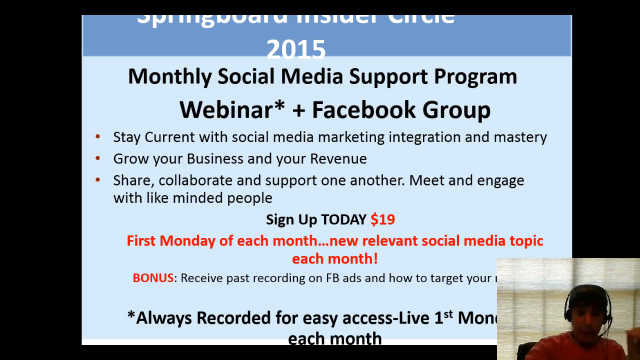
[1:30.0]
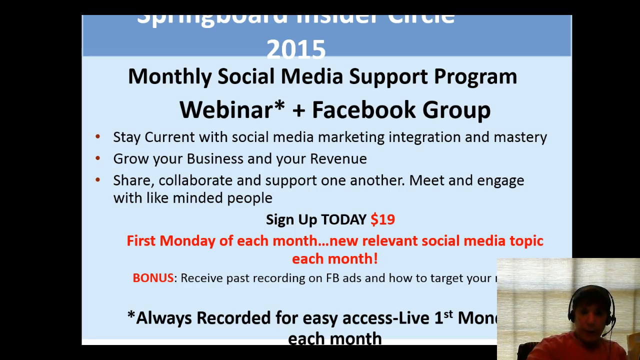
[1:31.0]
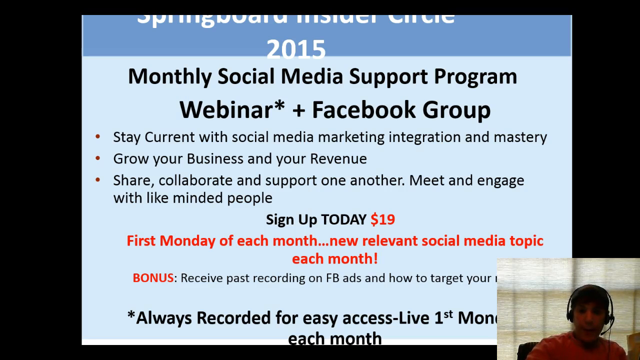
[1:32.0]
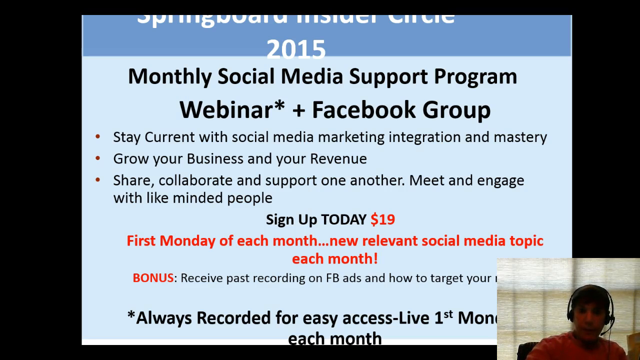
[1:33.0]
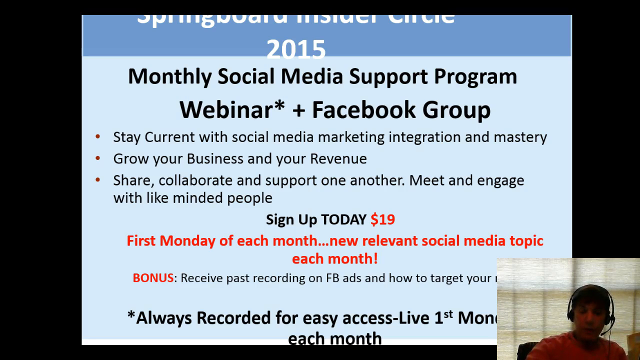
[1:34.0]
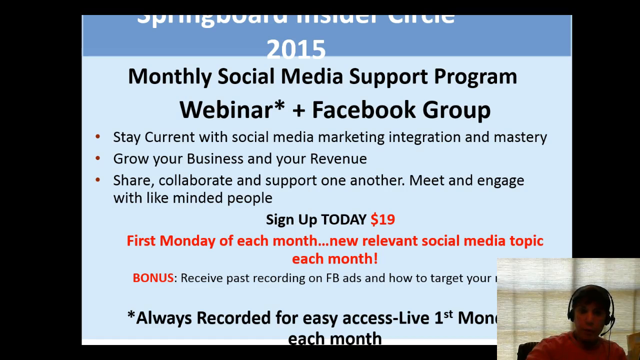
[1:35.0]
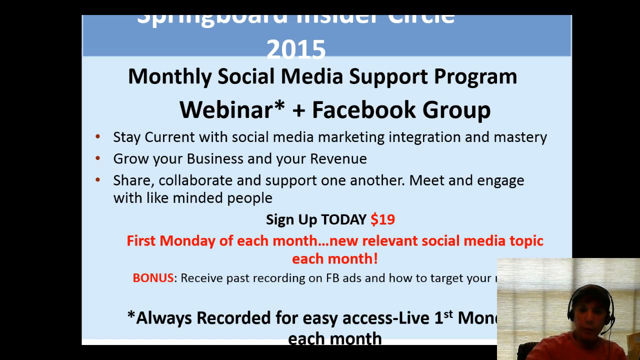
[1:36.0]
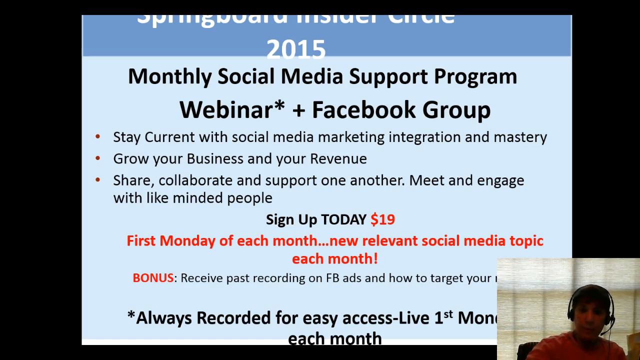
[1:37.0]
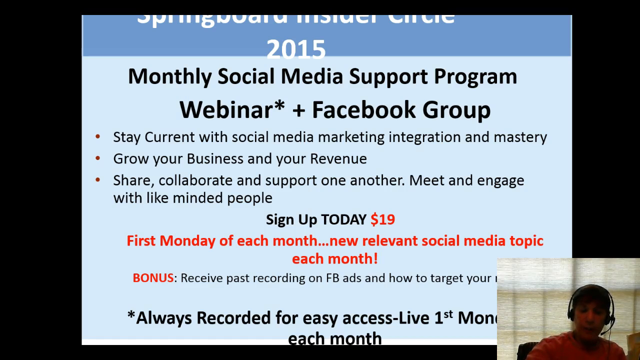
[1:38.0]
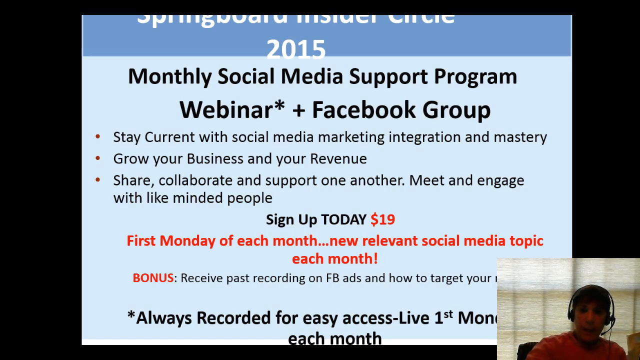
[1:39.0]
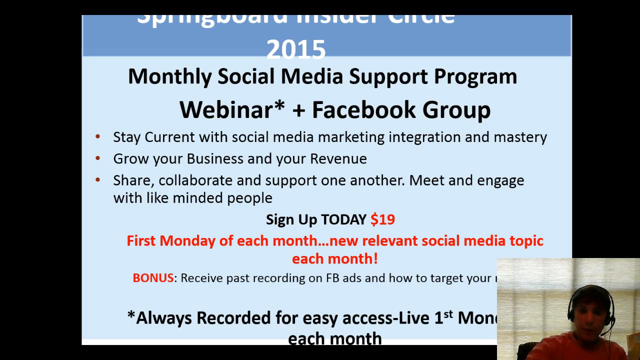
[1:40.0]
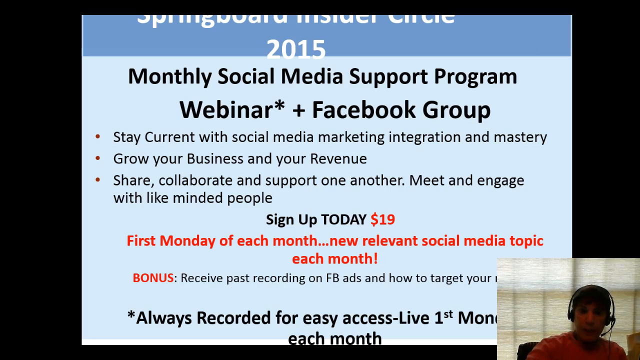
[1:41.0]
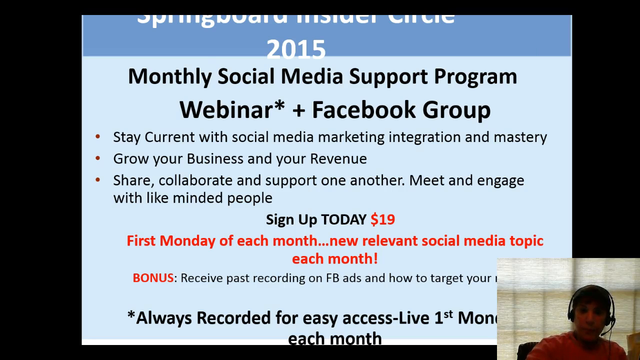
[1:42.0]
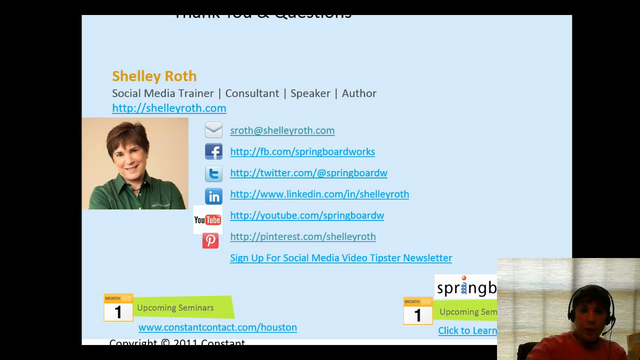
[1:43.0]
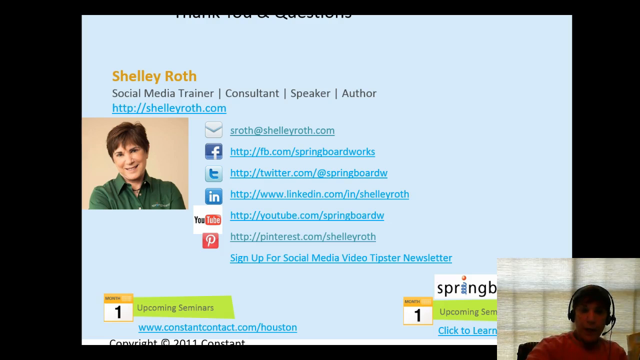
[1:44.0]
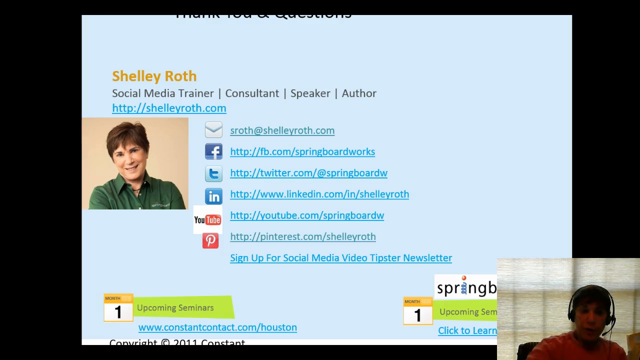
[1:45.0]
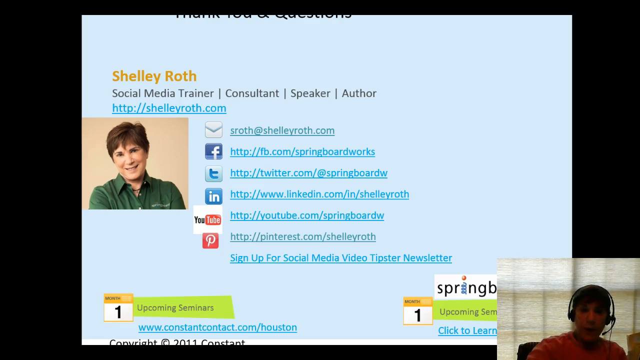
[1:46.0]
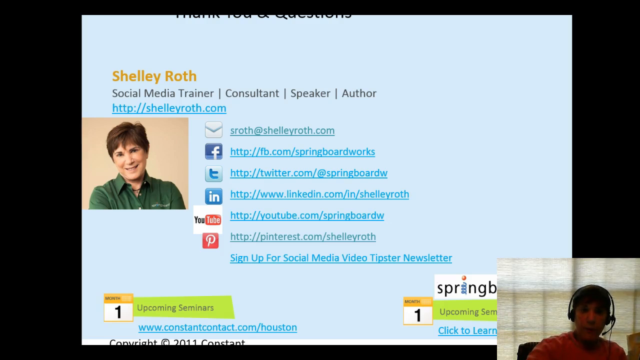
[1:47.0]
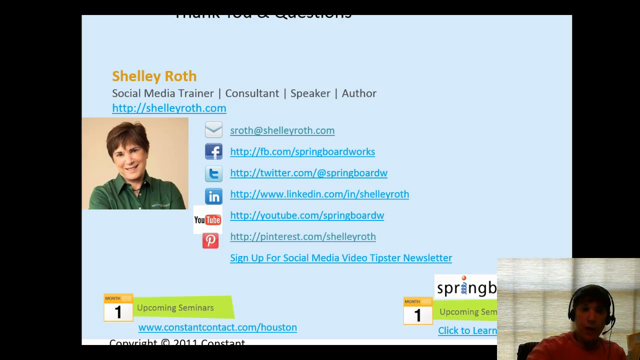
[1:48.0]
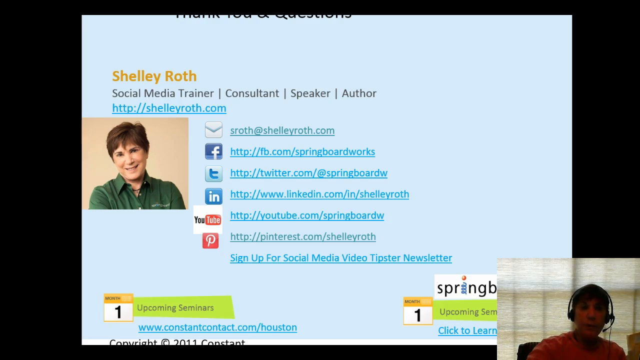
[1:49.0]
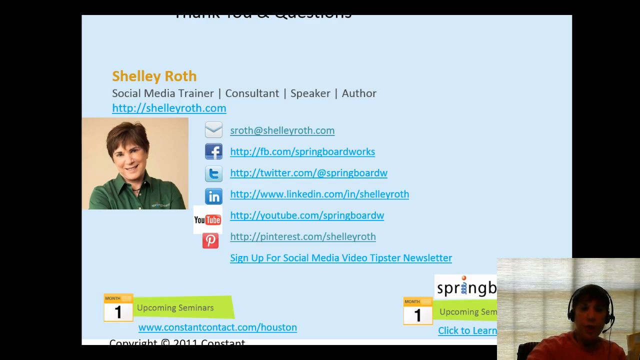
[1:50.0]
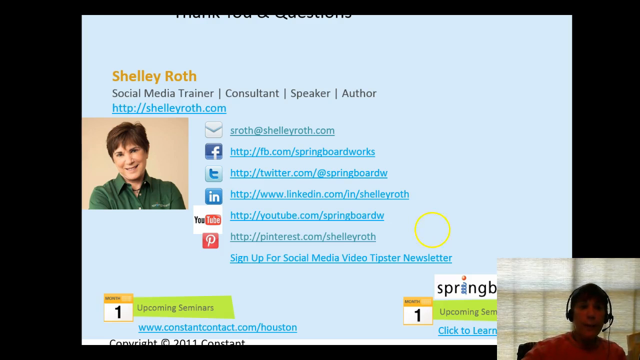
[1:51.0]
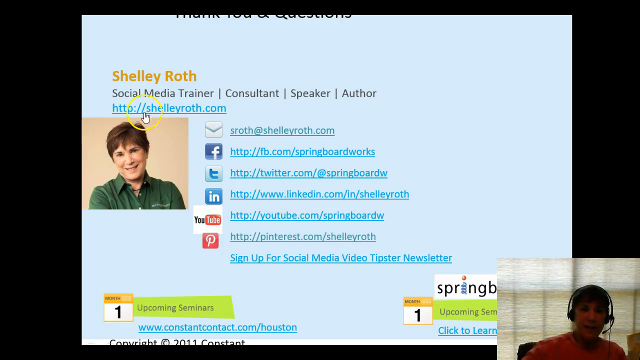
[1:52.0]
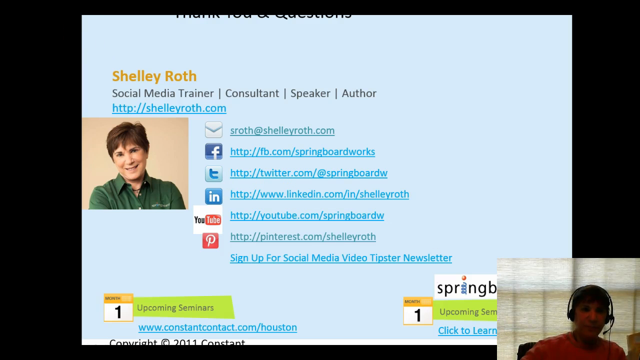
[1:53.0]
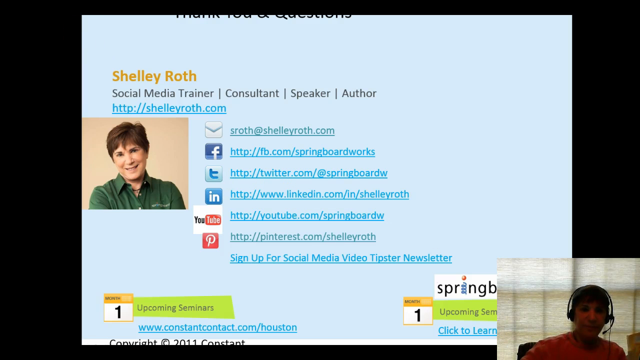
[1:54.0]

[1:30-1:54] A webcam in the bottom right corner shows someone wearing a headset with a built-in microphone, in an office of some kind with a large window behind them covered by a gray curtain. A slide makes up the bulk of the image and reads "Springboard Insider Circle 2015, monthly social media program, webinar, plus Facebook group. Stay current with social media marketing integration and mastery. Grow your business and your revenue. Share, collaborate, and support one another. Meet and engage with like-minded people. Sign up today, $19. First Monday of each month, new relevant social media topic each month. Bonus, receive past recording on Facebook ads and how to target your. Always recorded for easy access, live first Monday each month." A new slide then reads "thank you and questions," with a picture of a person labeled "Shelly Roth social media trainer, consultant, speaker, author, http://shellyroth.com," along with various contact information and dates for upcoming seminars in the bottom left and bottom right corners.